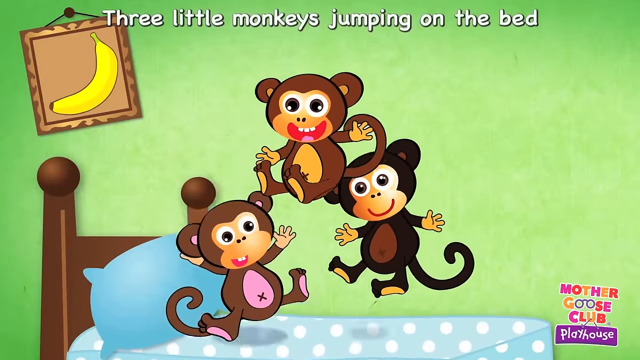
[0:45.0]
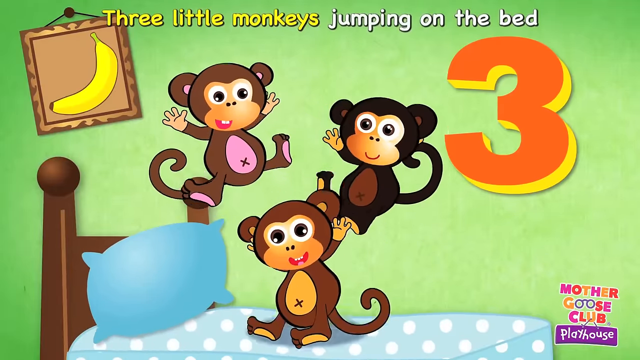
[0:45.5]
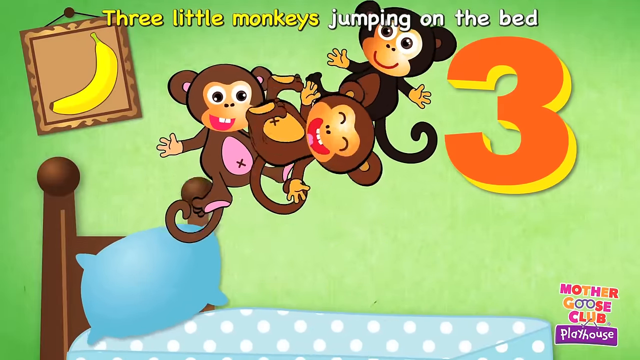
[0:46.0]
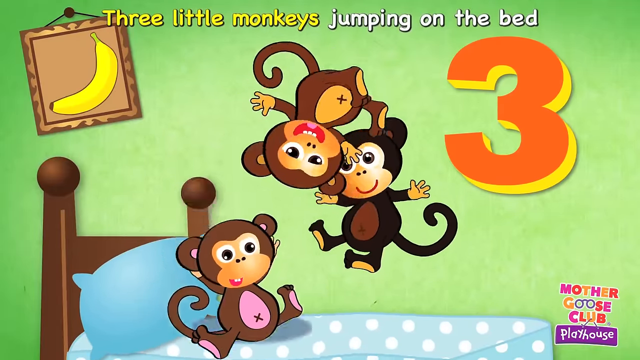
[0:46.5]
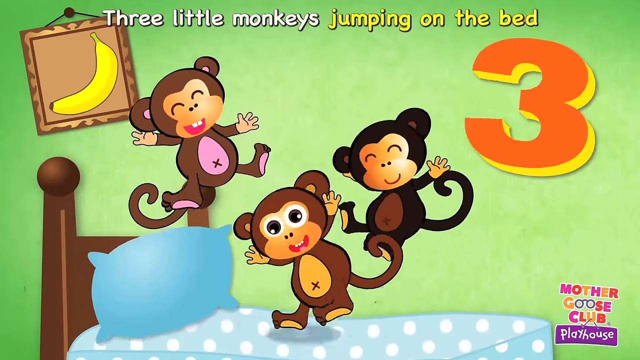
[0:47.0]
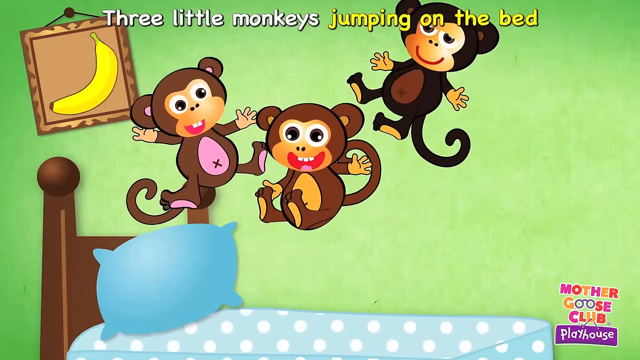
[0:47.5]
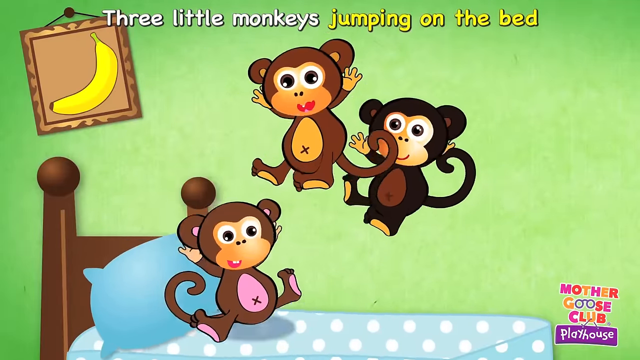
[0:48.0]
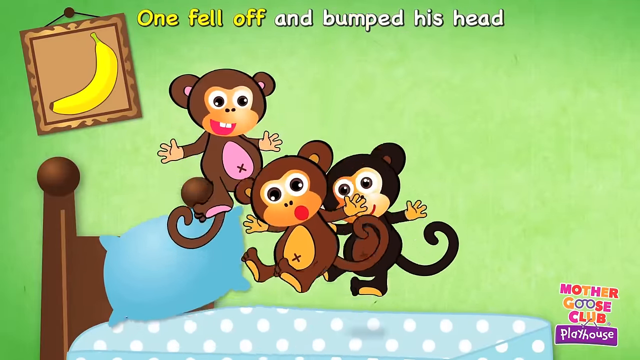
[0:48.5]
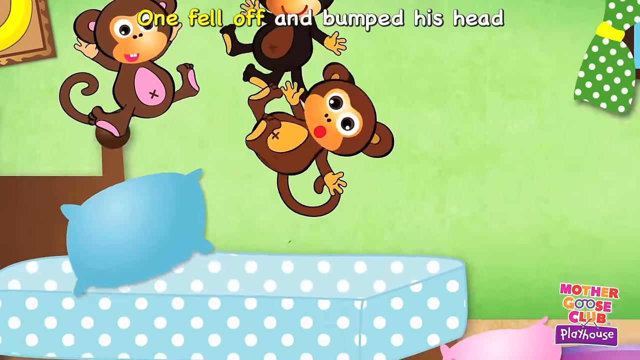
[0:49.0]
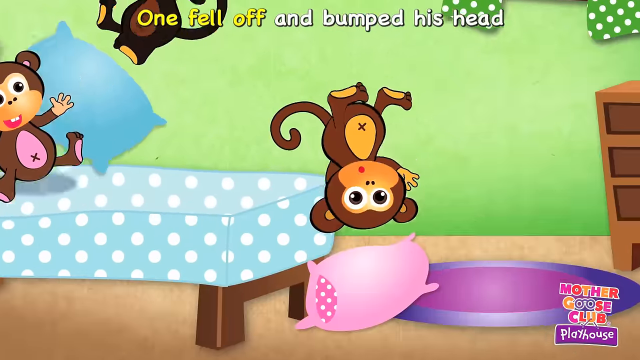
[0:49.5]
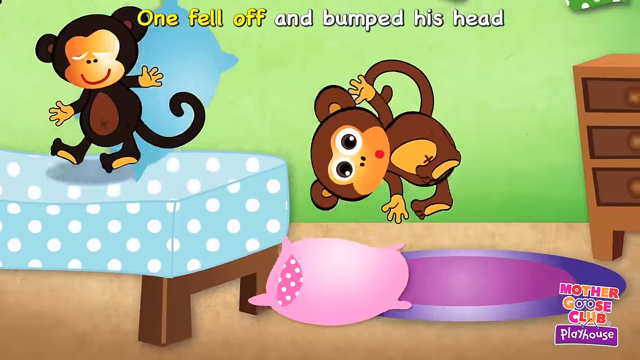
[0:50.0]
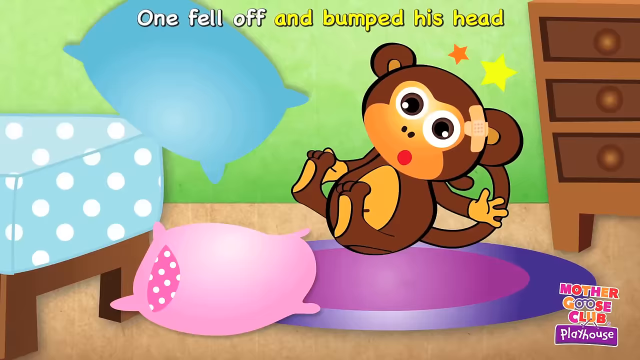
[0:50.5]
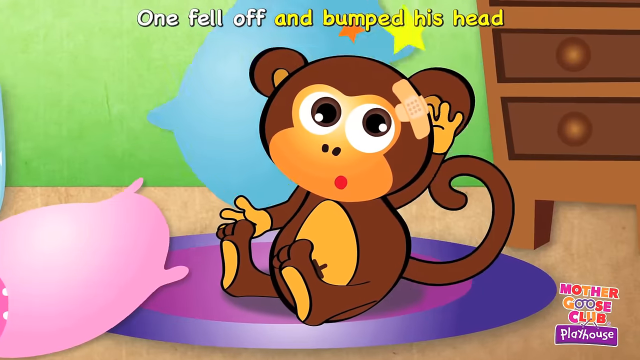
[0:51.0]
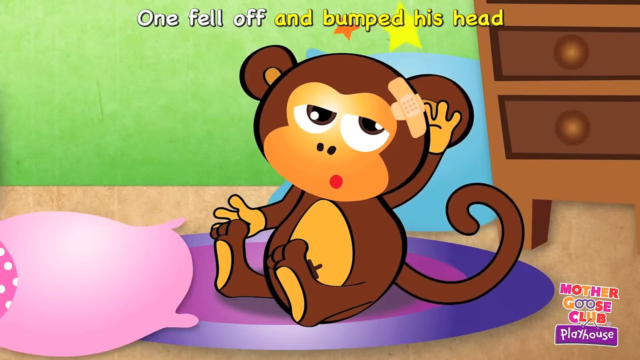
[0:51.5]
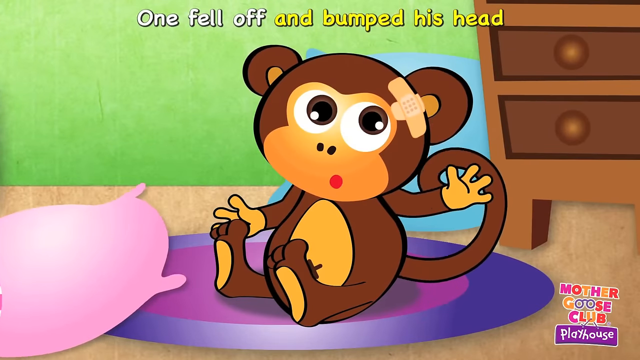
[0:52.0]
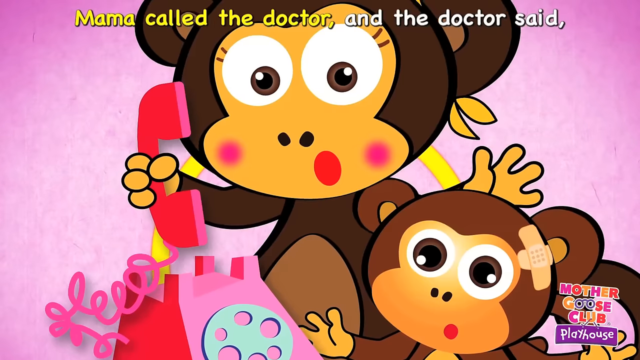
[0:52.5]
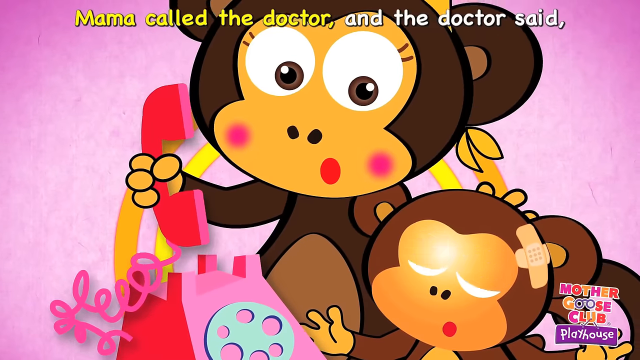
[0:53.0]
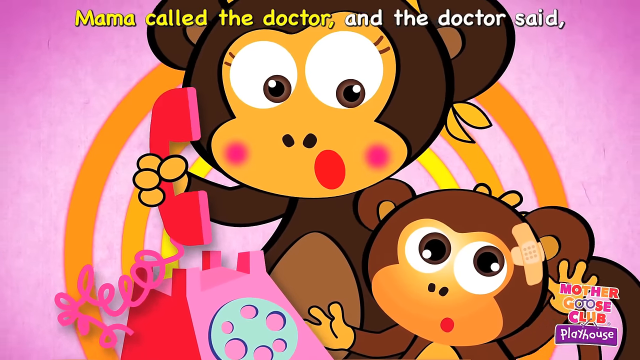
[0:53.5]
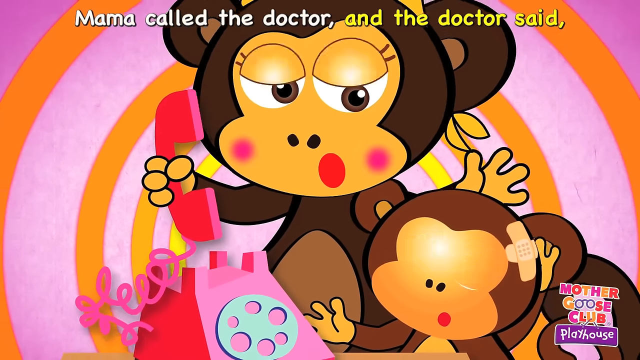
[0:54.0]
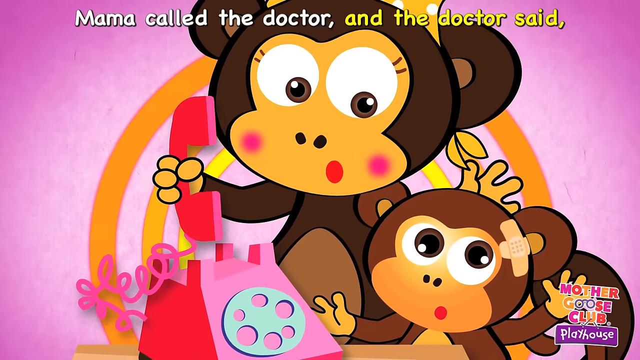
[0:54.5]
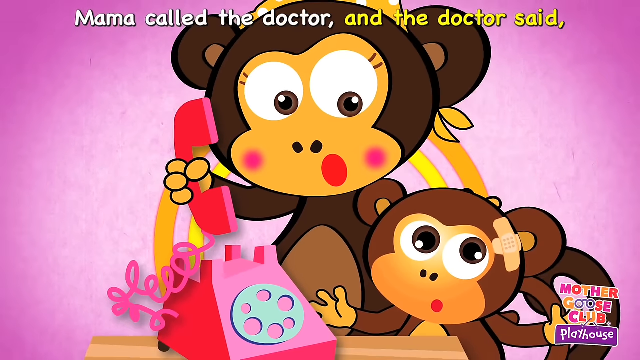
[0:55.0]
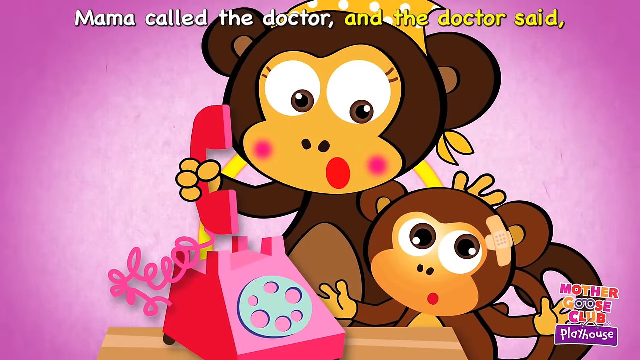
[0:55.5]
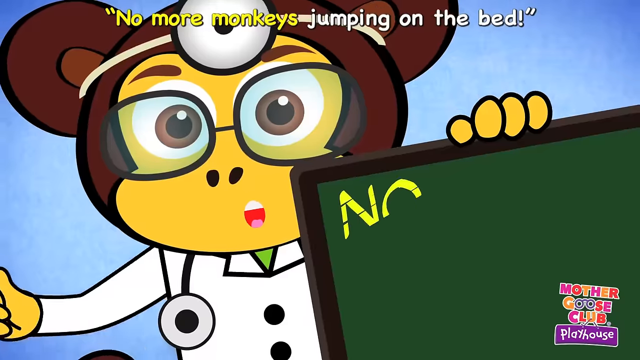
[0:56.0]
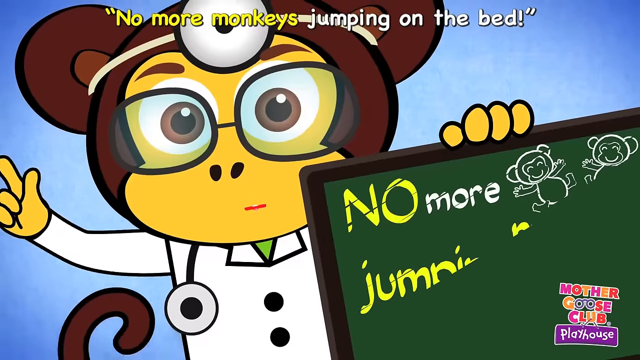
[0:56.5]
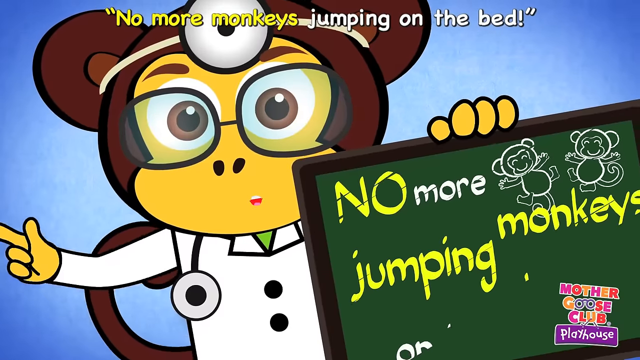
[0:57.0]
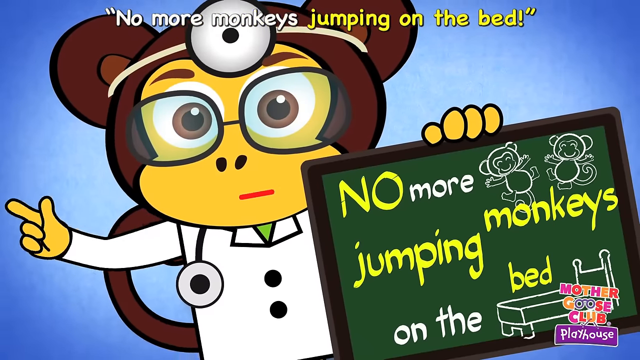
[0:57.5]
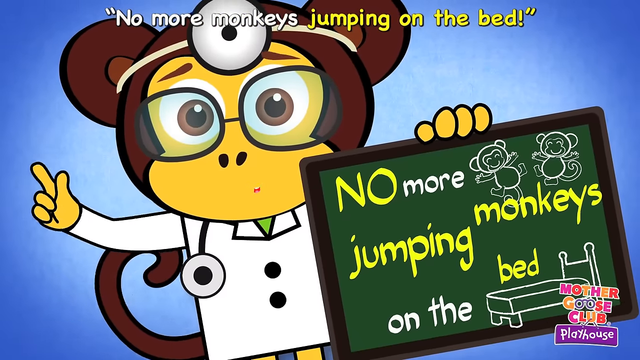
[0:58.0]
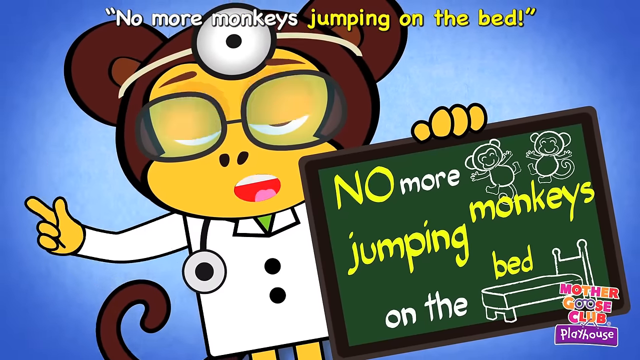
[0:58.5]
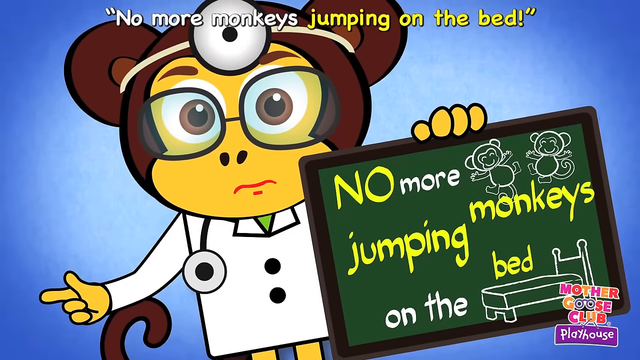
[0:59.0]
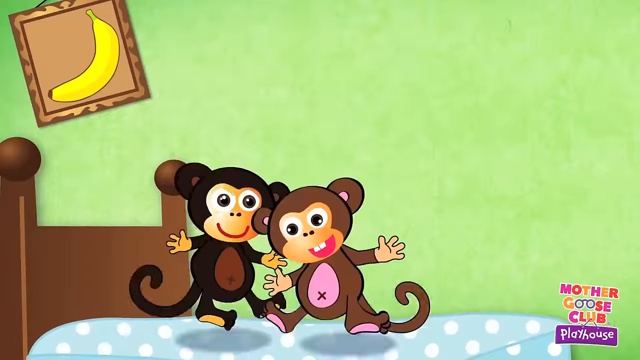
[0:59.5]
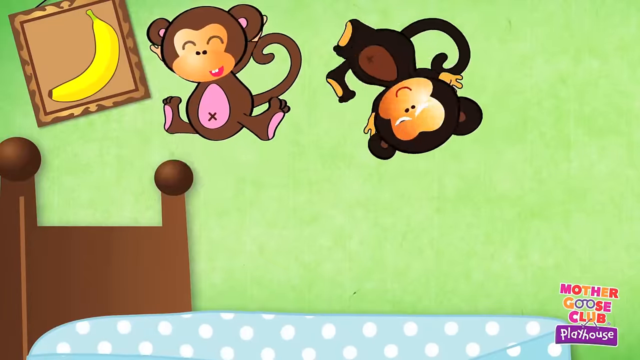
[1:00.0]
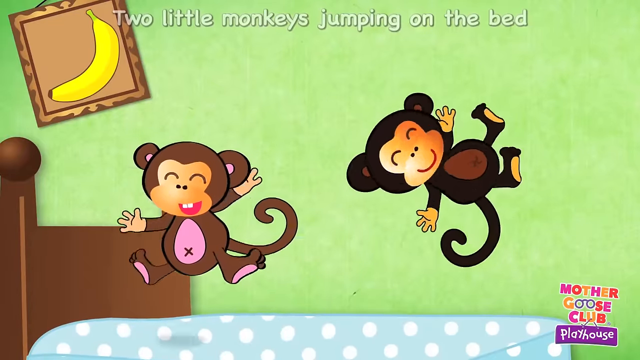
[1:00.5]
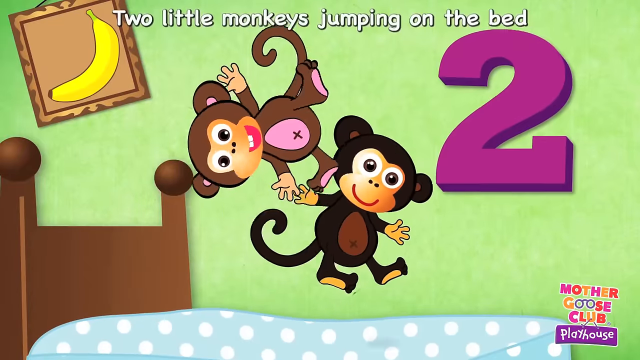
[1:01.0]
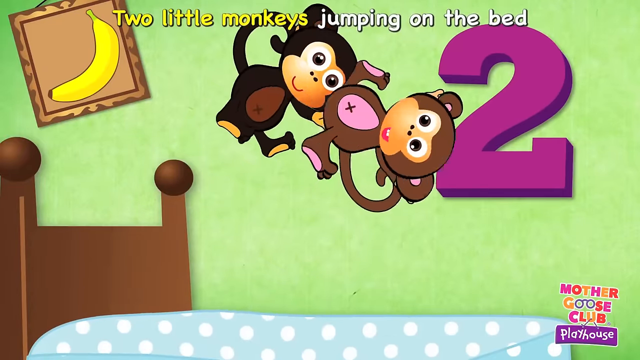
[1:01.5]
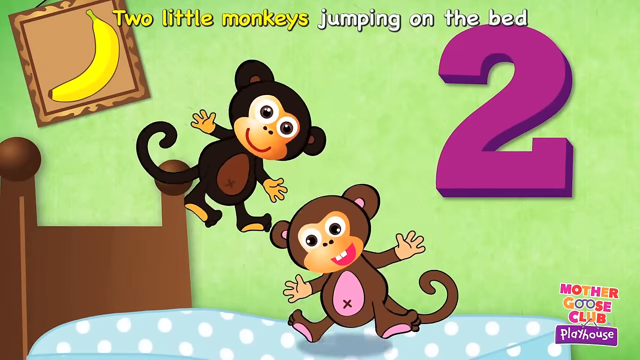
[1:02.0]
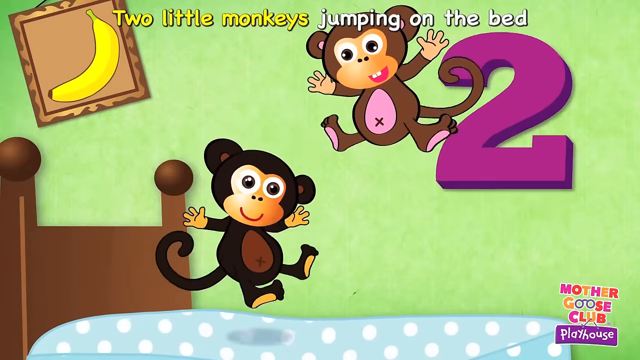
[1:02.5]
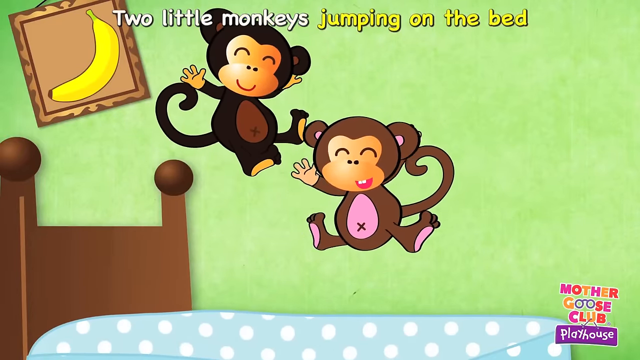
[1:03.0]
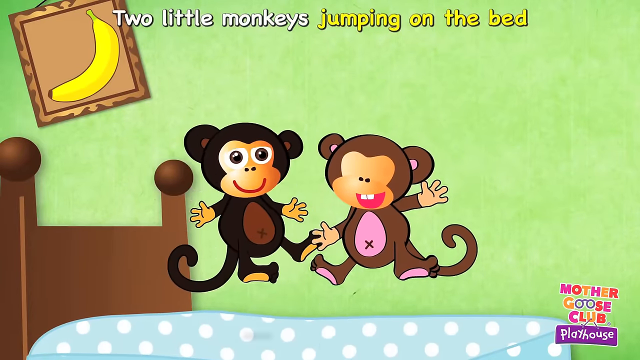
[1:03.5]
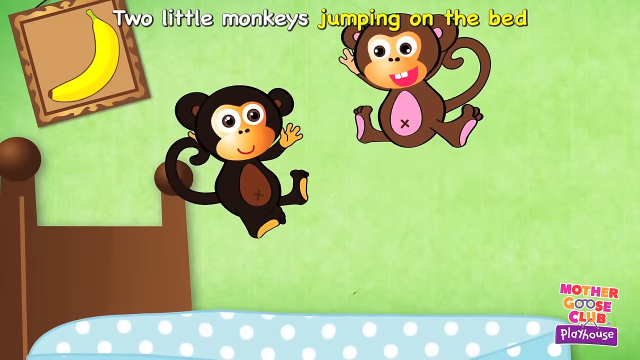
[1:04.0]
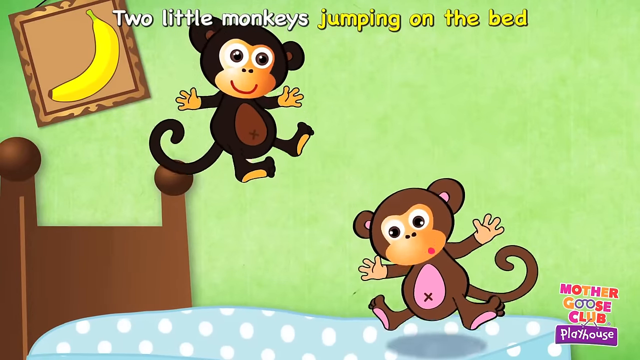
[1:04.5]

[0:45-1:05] Three monkeys are on the bed, including a monkey with pink and brown and a solid brown monkey. Both pillows fall off the bed. The one that falls off is brown, with a brown belly and brown ears, and hits its head on a pink pillow; the blue pillow falls behind it. A band-aid goes on the viewer's right, the monkey's left, on the ear. The mom, who wears a bandana, uses the pink phone, which is again on the viewer's left, and the circles behind her are kind of yellow to orangish. The doctor has a little green chalkboard that says "no more monkeys jumping on the bed," with the lettering apparently in just two colors, yellow and white. The doctor's tail is visible as she waves her white hand, telling them no more jumping on the bed. The banana picture is still up there.